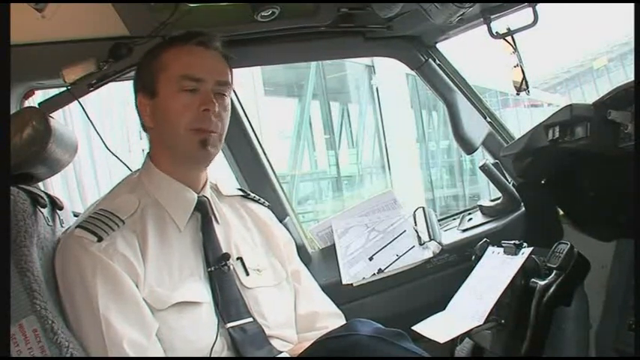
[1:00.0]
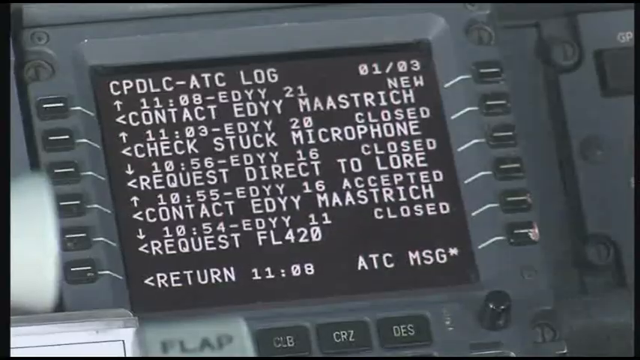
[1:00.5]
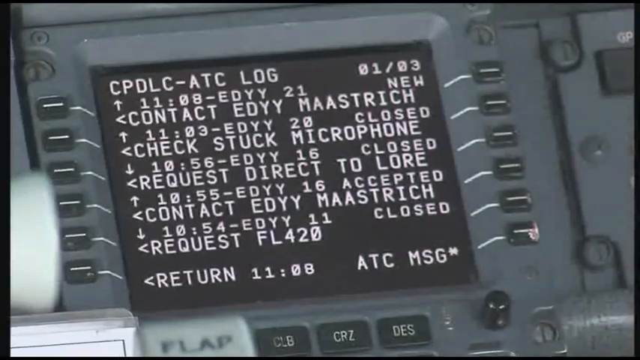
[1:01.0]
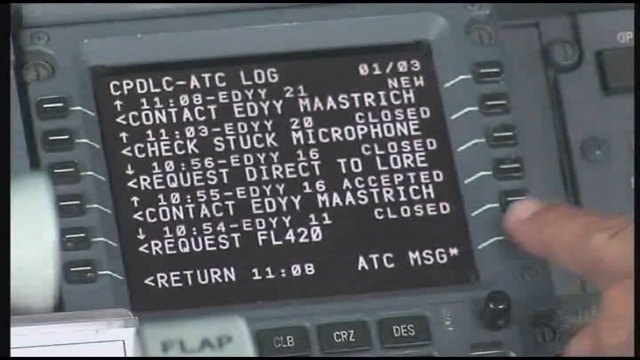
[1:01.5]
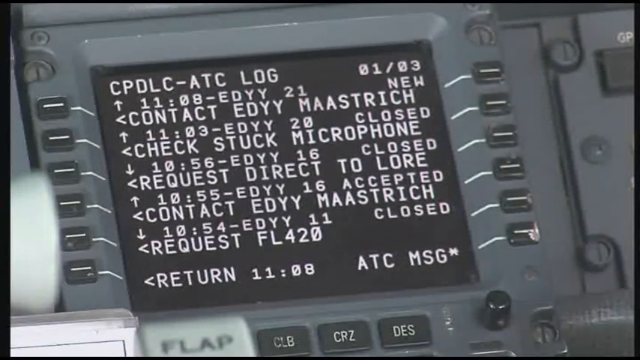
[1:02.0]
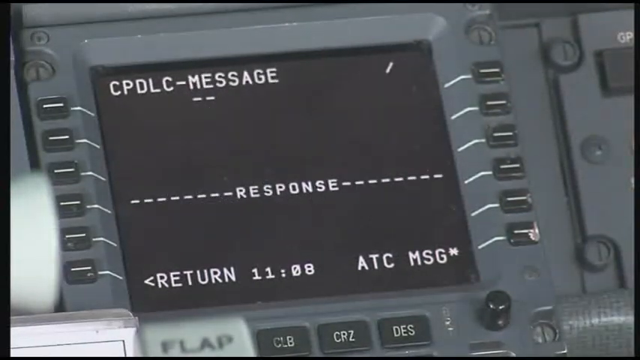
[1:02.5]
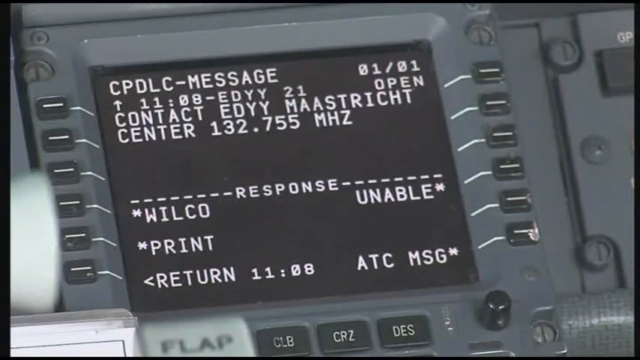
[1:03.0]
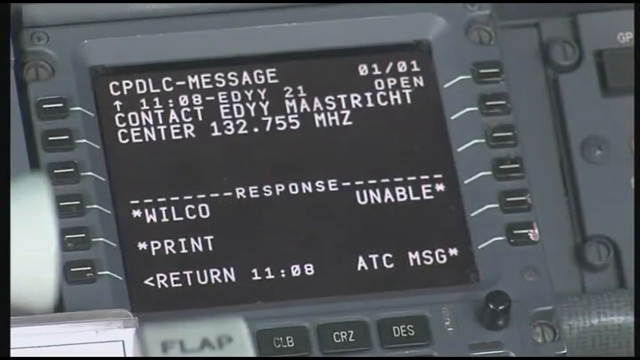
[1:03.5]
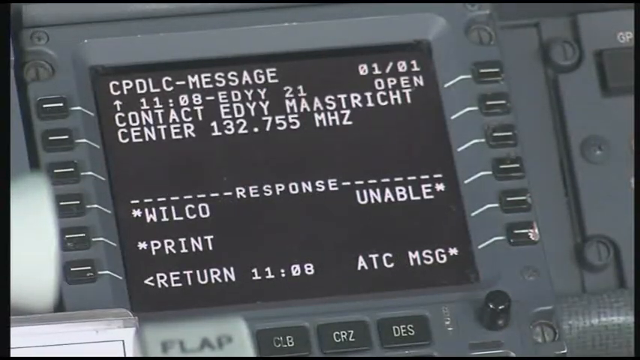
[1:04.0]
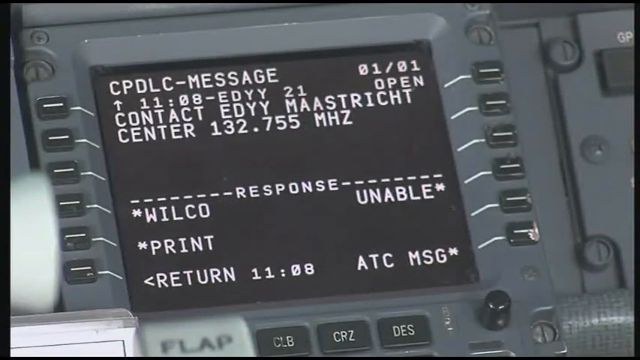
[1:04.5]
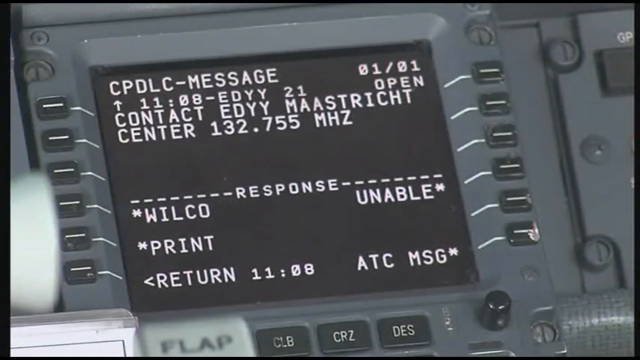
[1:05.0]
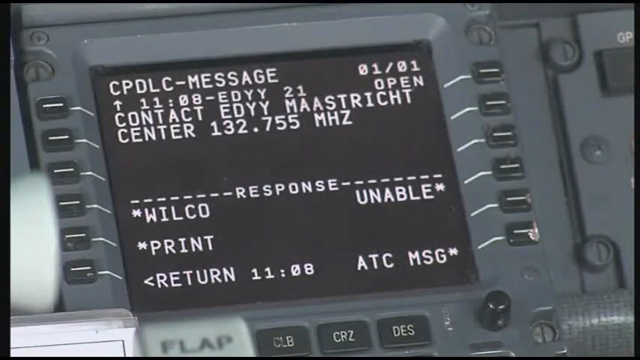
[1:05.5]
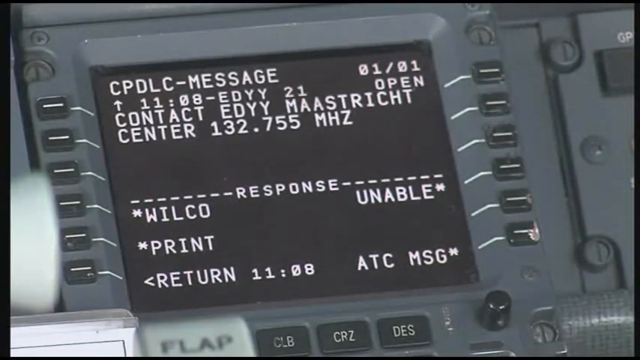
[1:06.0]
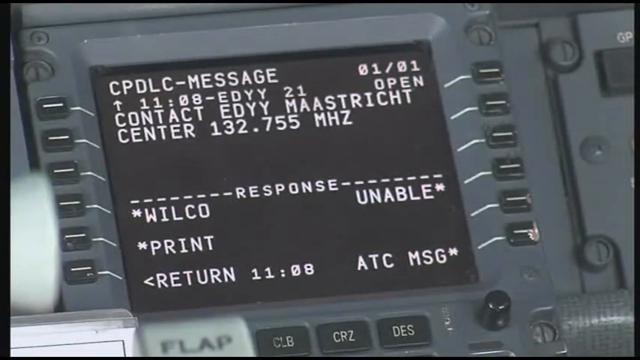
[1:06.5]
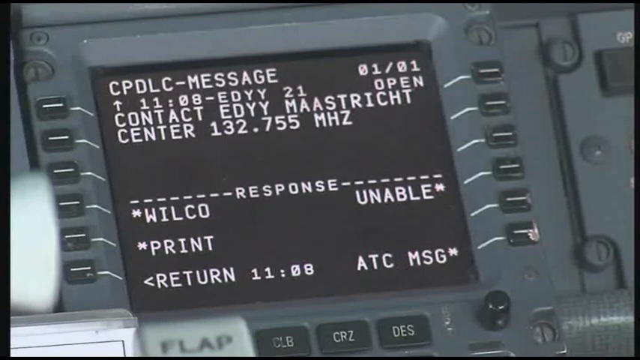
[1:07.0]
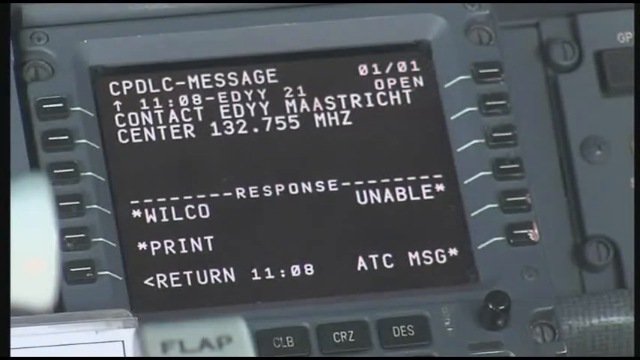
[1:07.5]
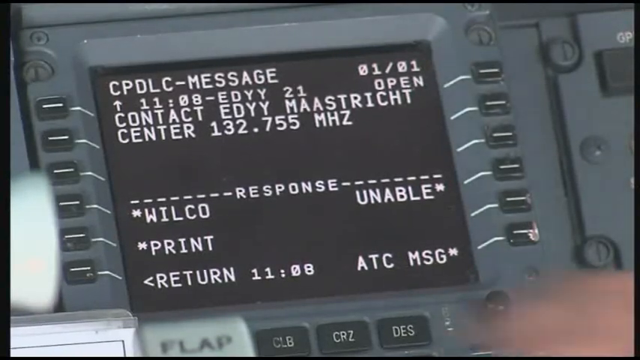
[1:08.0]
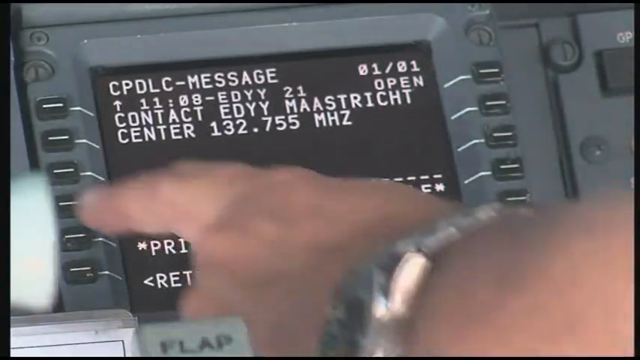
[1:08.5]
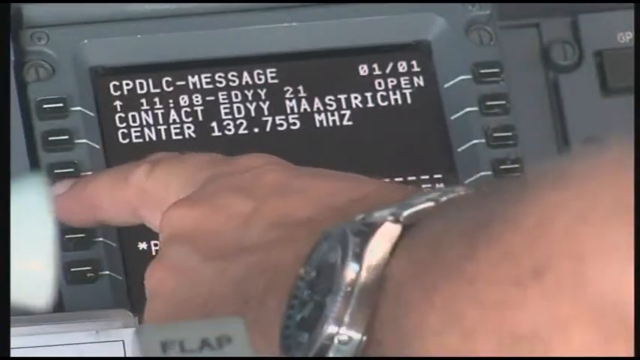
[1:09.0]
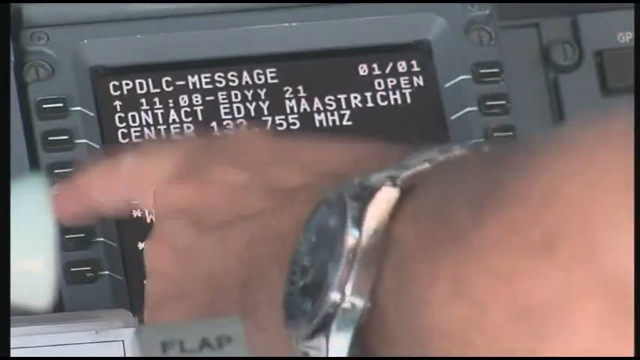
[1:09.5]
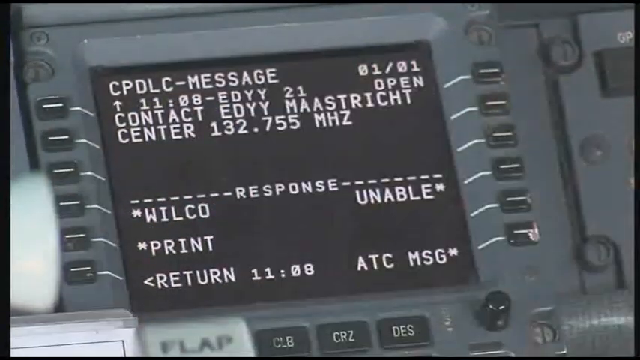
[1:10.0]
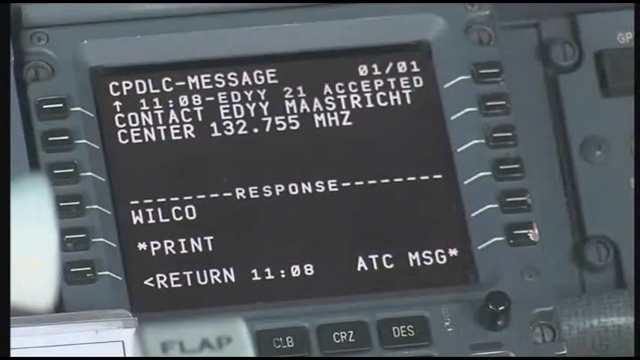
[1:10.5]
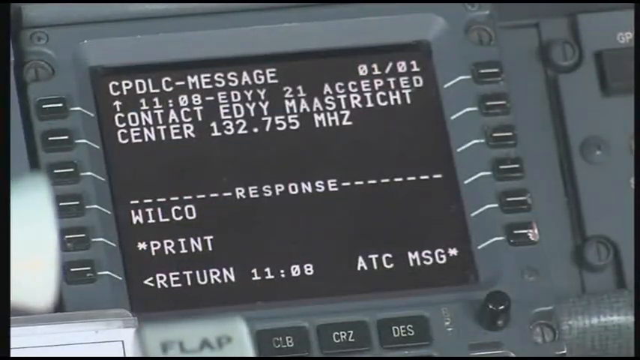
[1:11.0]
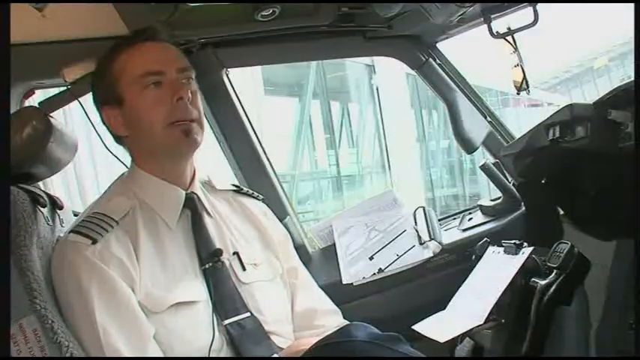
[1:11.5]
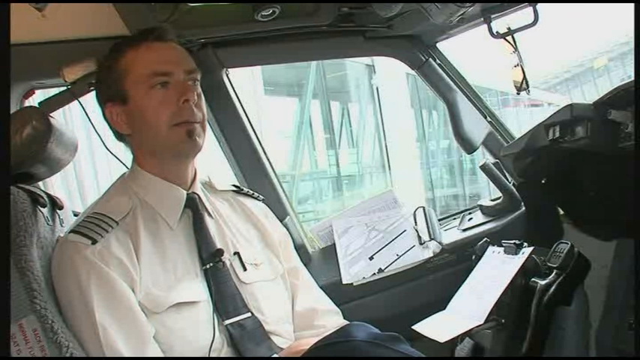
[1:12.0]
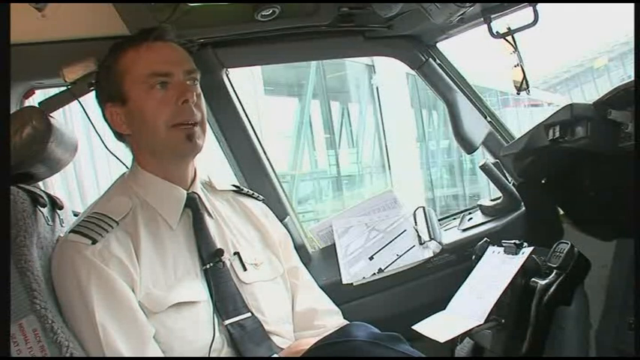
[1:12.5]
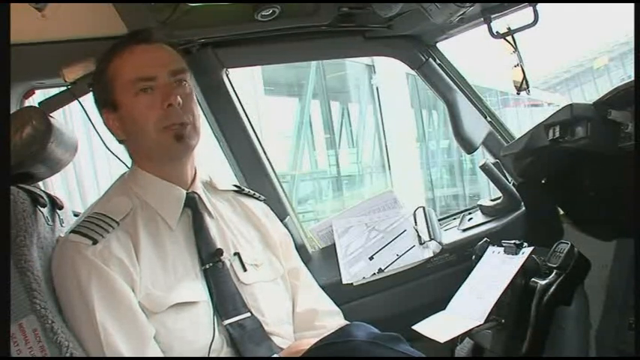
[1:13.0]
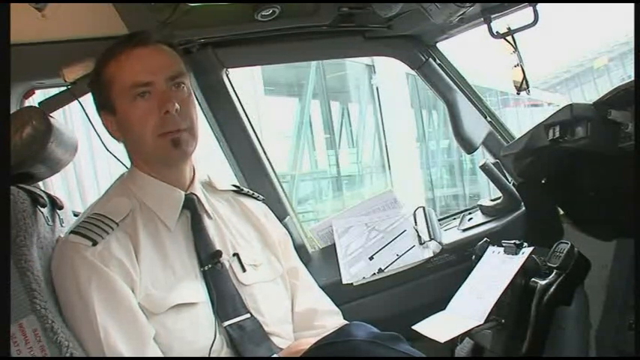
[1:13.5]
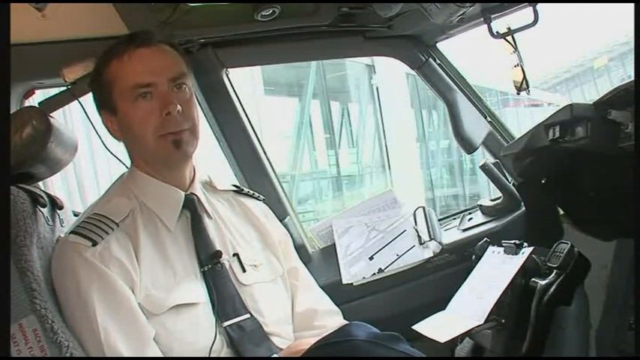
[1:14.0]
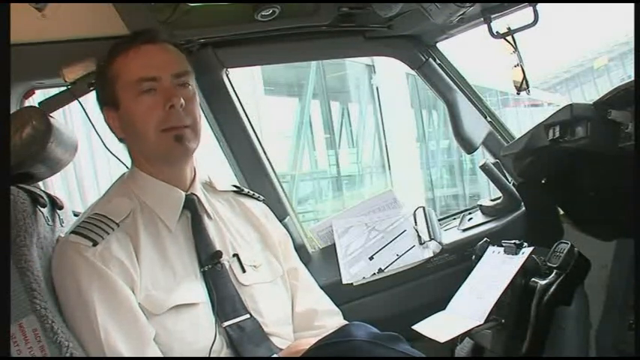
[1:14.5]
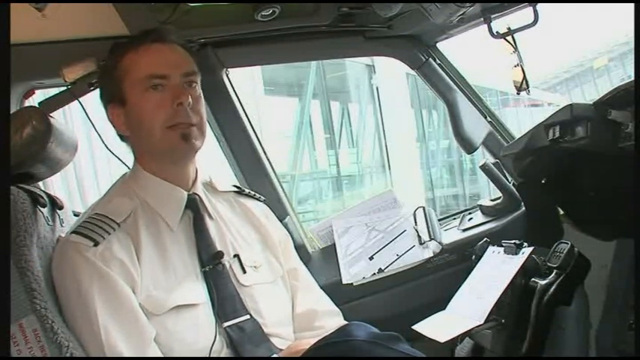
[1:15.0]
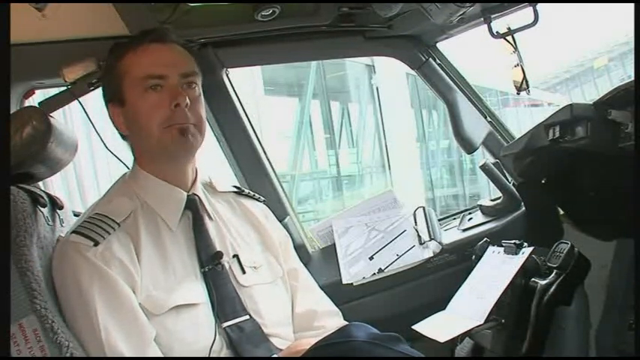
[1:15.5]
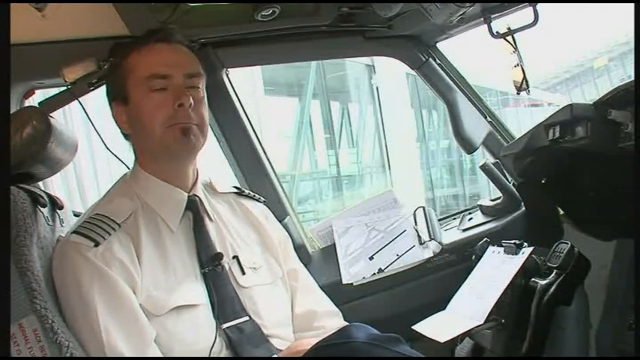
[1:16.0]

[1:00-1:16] The camera goes back to the digital screen, this time showing only the screen and the side buttons, not the buttons below. The captain presses one button on the right side and the screen changes. This time there are not many lines of text: just a CPDLC message, a response line, then "return" and "ATC messaging", as well as the time "1108". More text then shows up. He presses another button, and a few variables on the screen change, but not much. The camera pans back to him talking in front of the camera, and the scene ends. He is in the driver's seat with a windshield and a window beside him; it is unclear whether this is a car or a boat. He has a mic attached to his necktie and two front pockets, one with a pen inserted in it. He speaks very slowly and with intention.